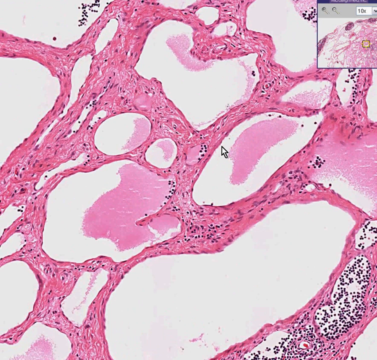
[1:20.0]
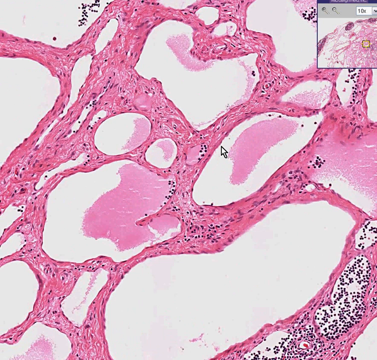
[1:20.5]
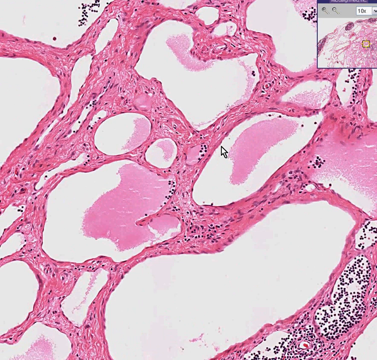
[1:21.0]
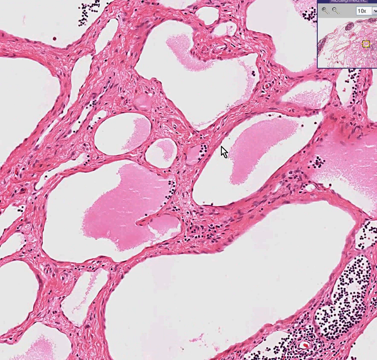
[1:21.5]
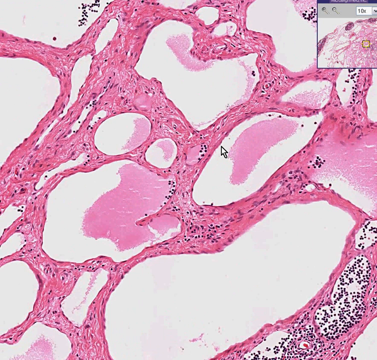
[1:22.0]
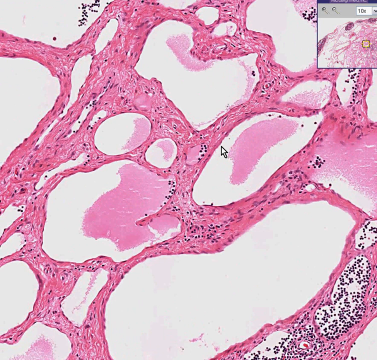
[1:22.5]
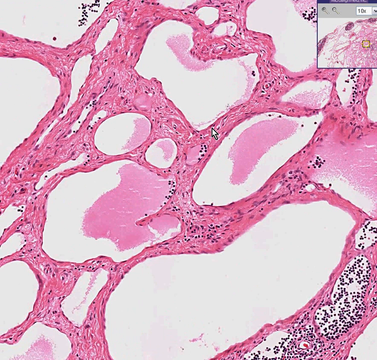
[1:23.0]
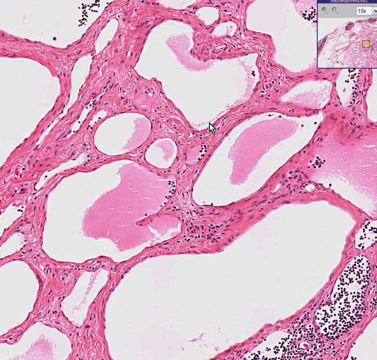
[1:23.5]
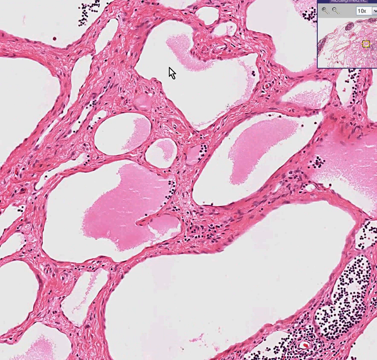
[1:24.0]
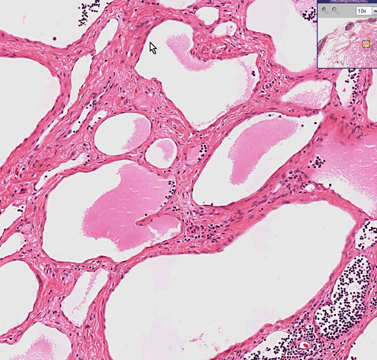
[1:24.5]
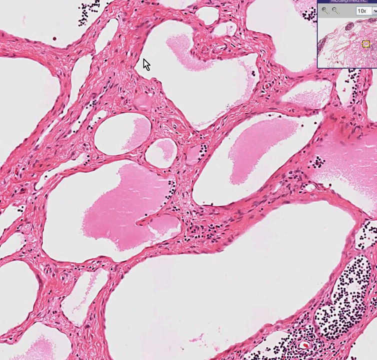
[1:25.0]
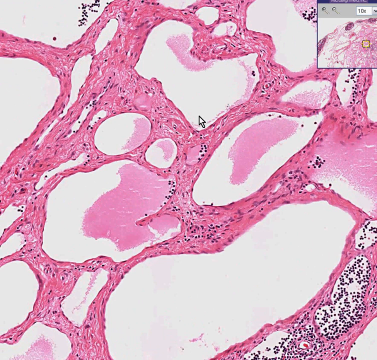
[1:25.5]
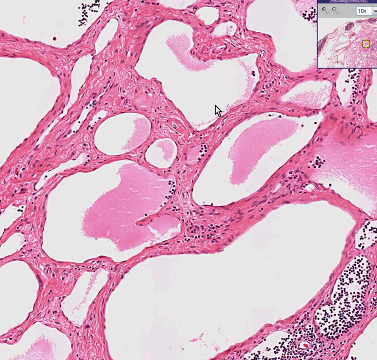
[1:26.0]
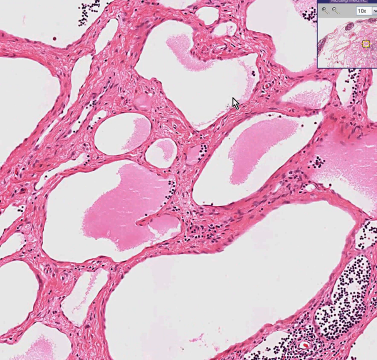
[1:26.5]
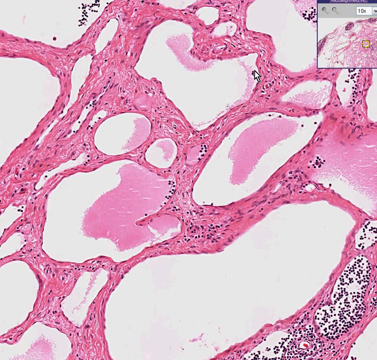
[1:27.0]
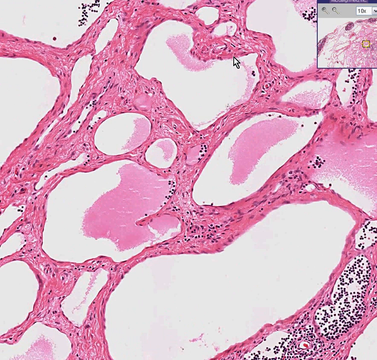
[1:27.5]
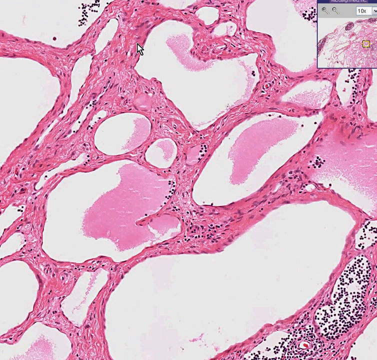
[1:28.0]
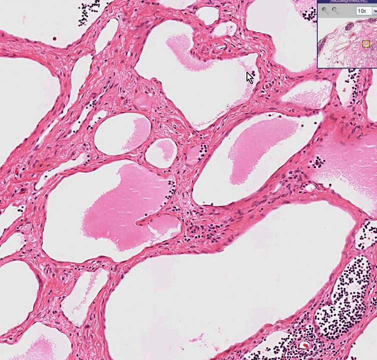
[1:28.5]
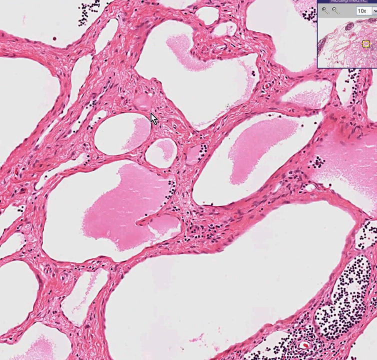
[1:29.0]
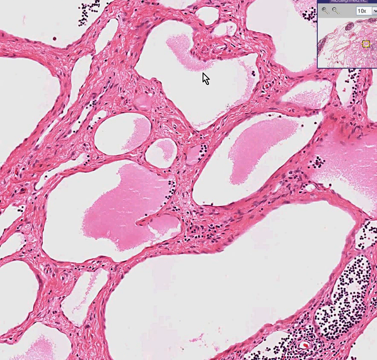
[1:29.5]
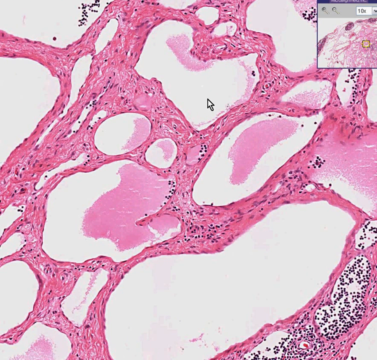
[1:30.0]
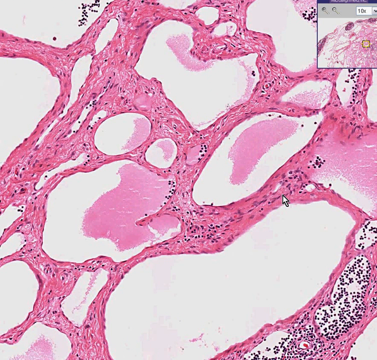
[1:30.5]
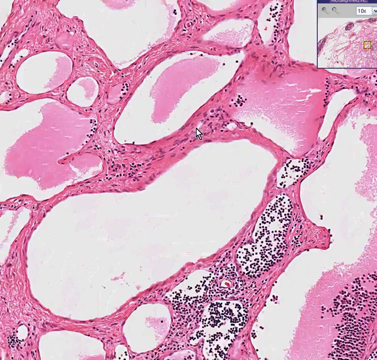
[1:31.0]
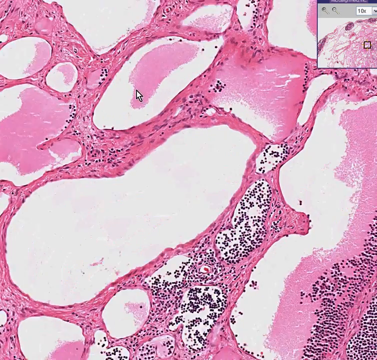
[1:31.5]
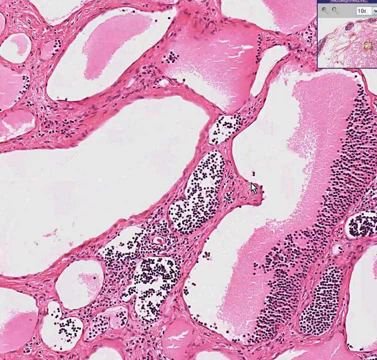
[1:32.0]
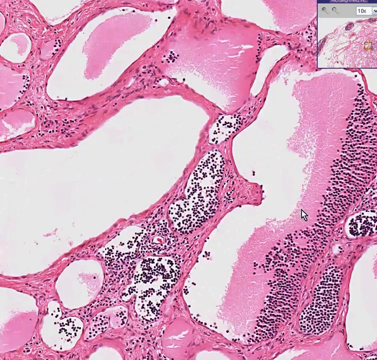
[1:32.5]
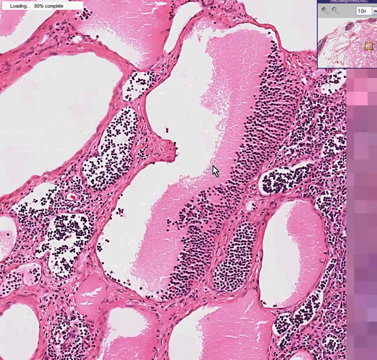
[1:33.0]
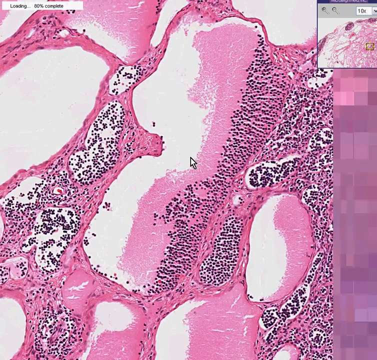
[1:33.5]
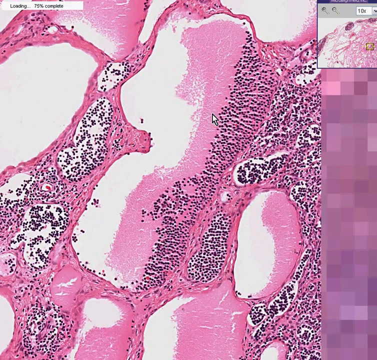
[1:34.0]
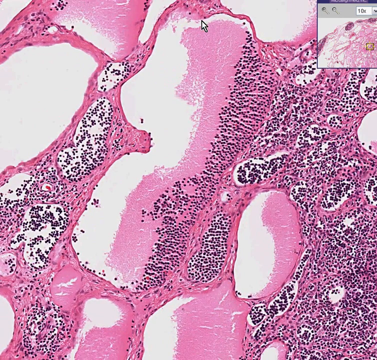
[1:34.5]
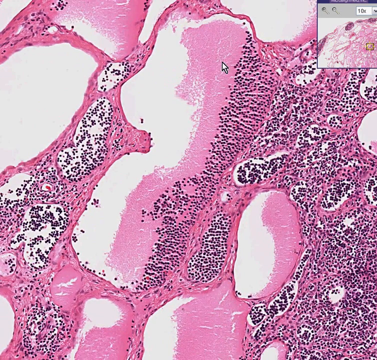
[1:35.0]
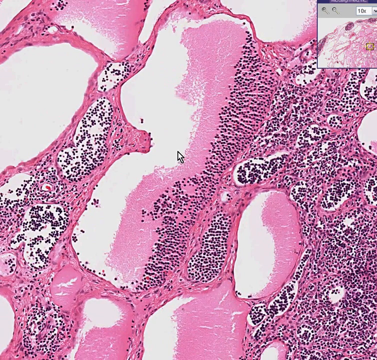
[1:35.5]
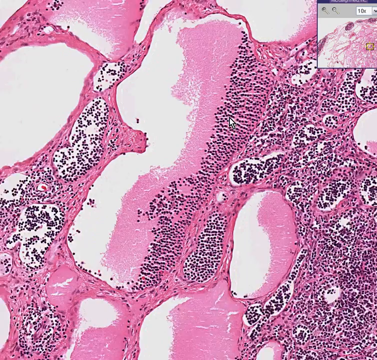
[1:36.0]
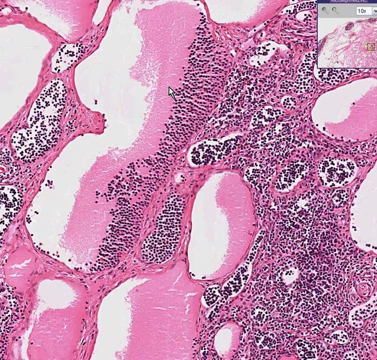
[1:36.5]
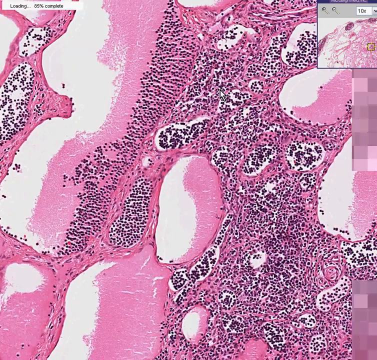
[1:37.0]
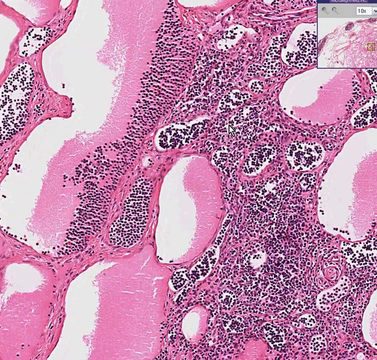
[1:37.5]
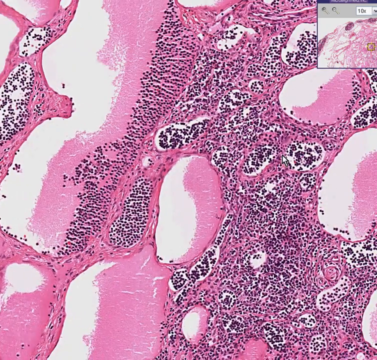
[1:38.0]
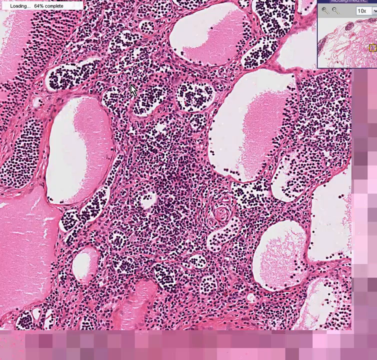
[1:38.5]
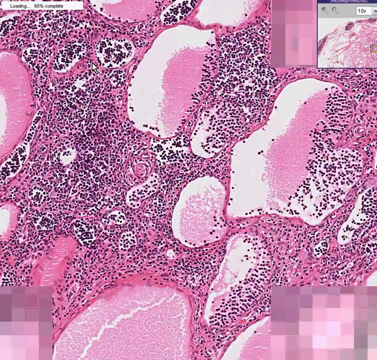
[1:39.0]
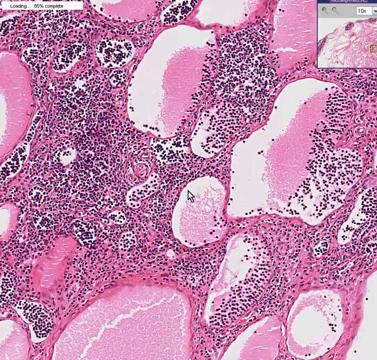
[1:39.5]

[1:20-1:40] Random strands of interconnected red material appear, with some pink in the background, while most of the background is white. Many black dots lie mostly over the red areas, with some over the white areas as well. The mouse pointer starts in the middle of the screen, and the user moves it around, pointing at different things. He uses the mouse to circle one of the areas of negative space, which is mostly white with a little red in the background. He then shifts the image down and to the right, revealing many more black dots, and keeps shifting it as the image renders.